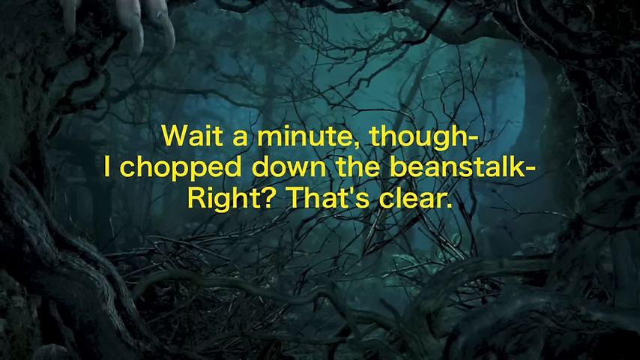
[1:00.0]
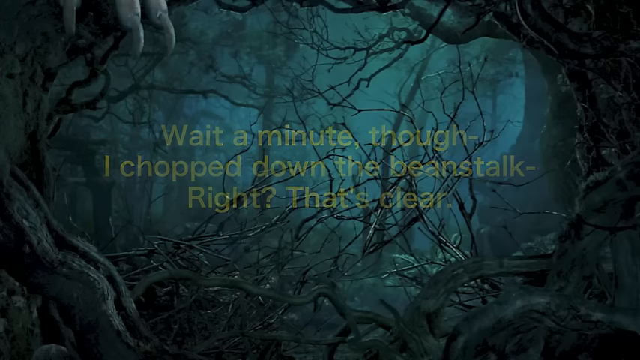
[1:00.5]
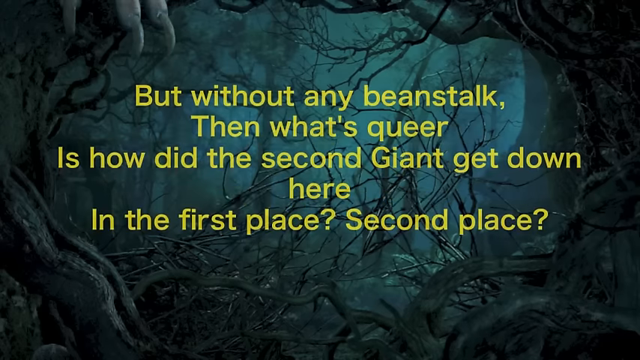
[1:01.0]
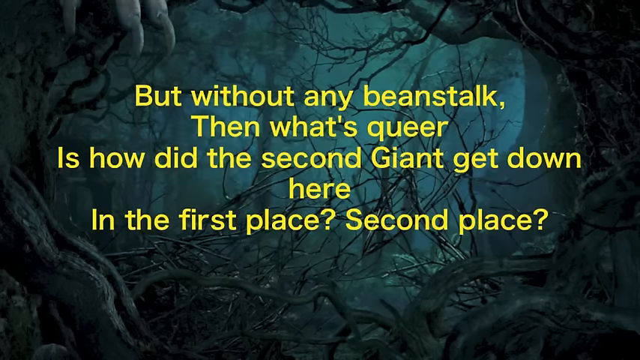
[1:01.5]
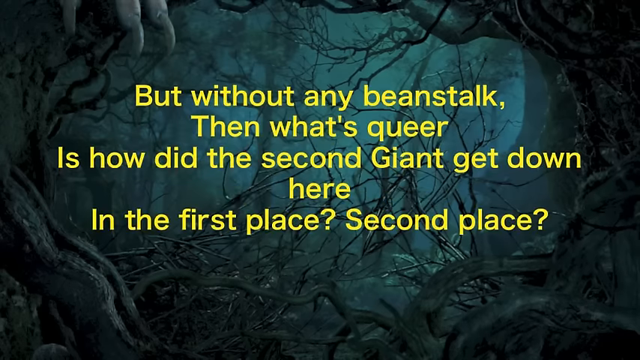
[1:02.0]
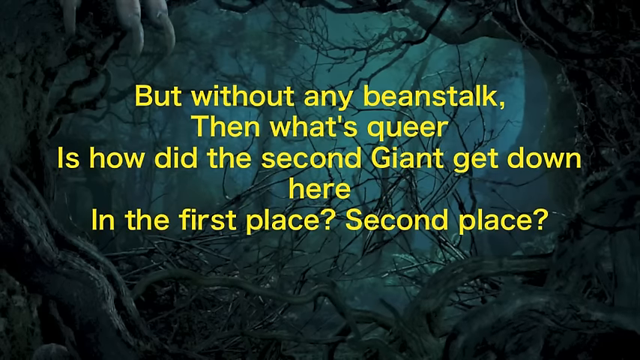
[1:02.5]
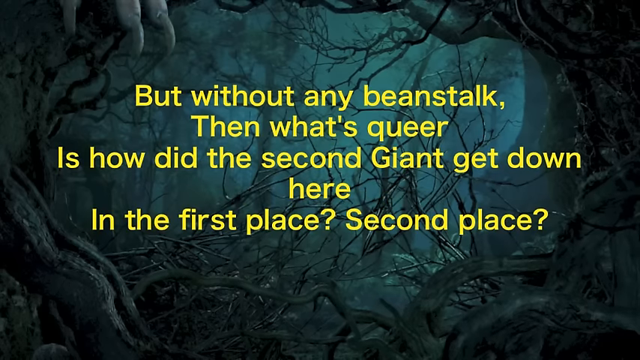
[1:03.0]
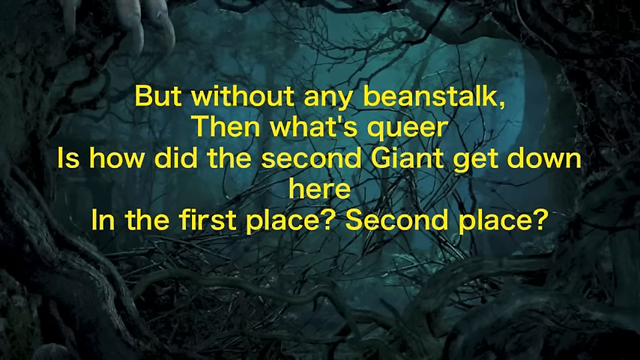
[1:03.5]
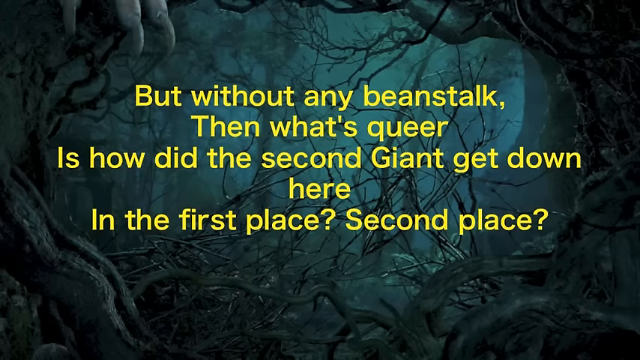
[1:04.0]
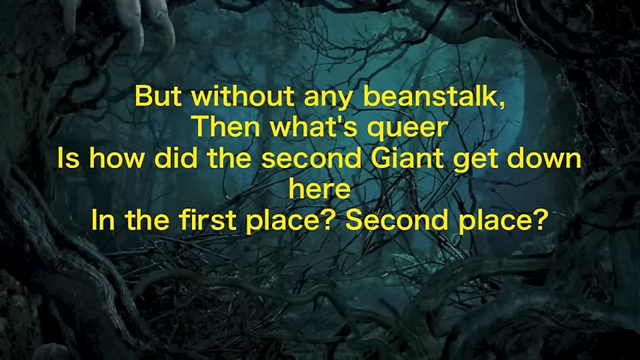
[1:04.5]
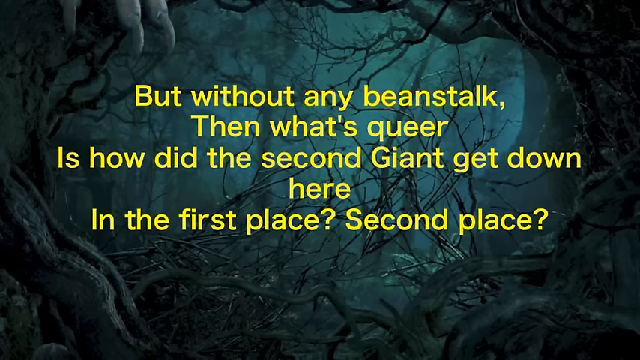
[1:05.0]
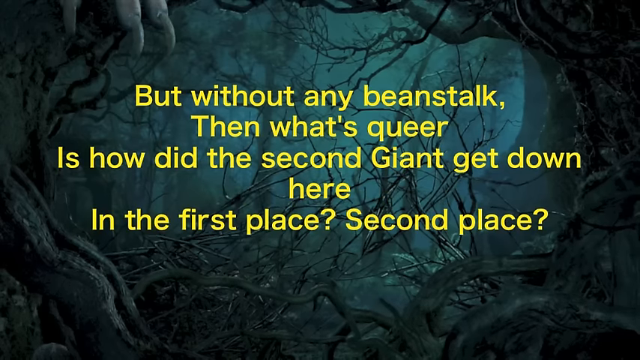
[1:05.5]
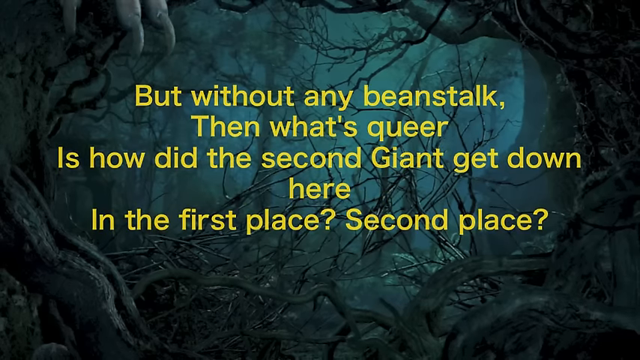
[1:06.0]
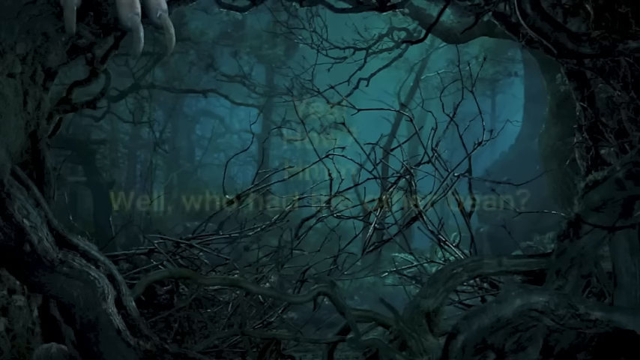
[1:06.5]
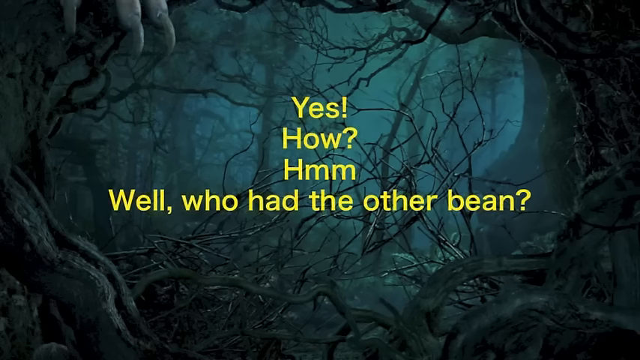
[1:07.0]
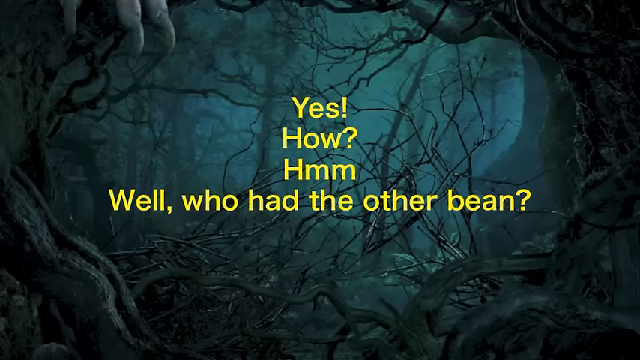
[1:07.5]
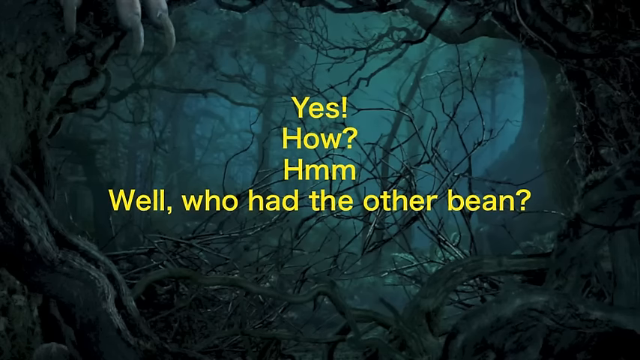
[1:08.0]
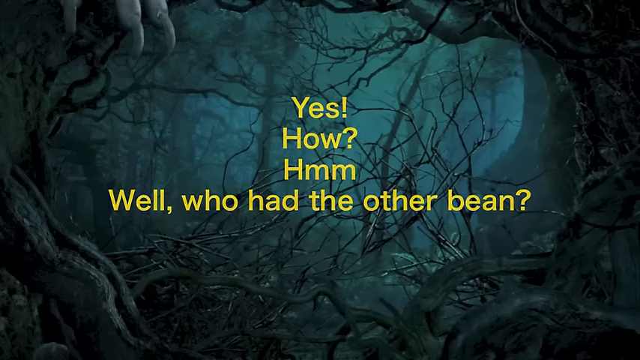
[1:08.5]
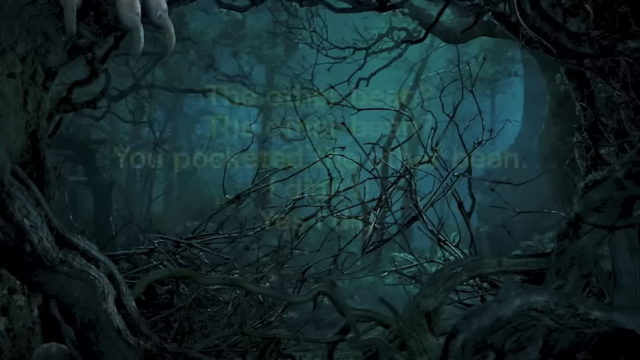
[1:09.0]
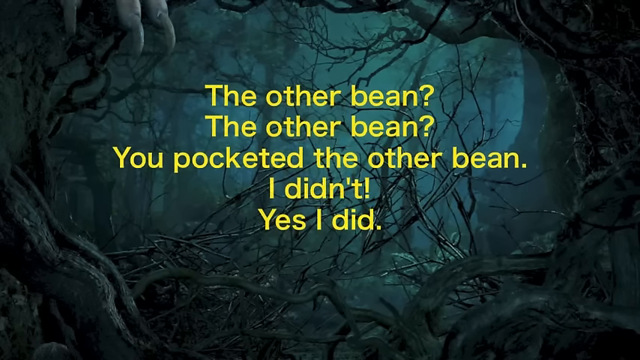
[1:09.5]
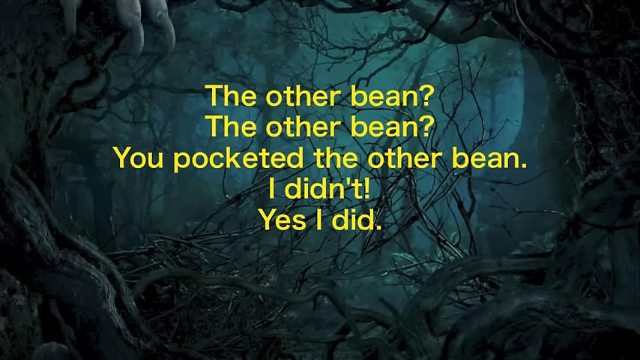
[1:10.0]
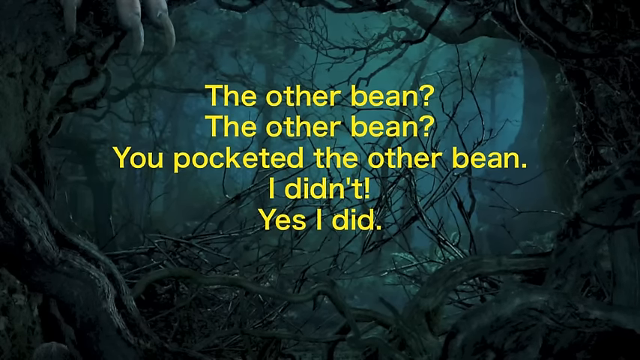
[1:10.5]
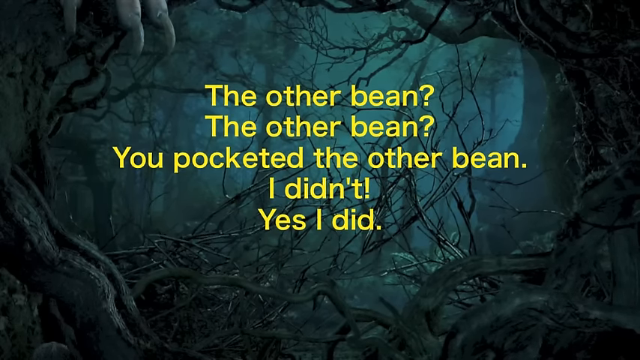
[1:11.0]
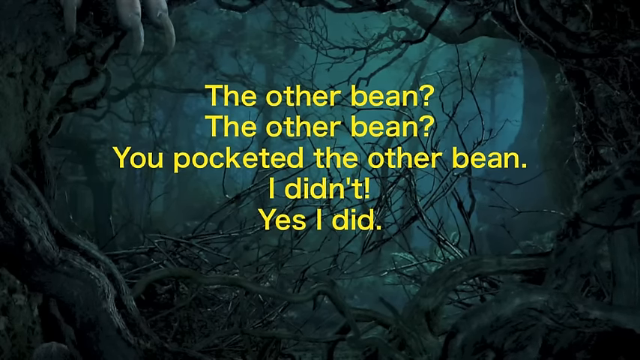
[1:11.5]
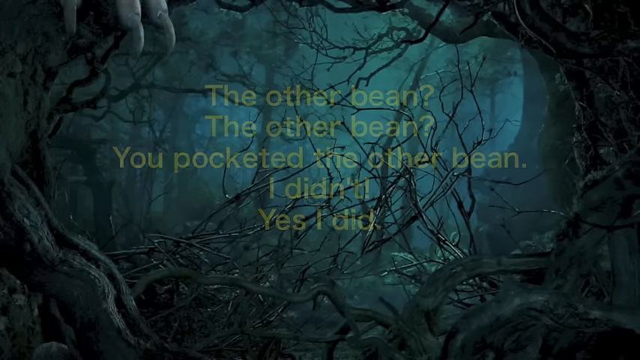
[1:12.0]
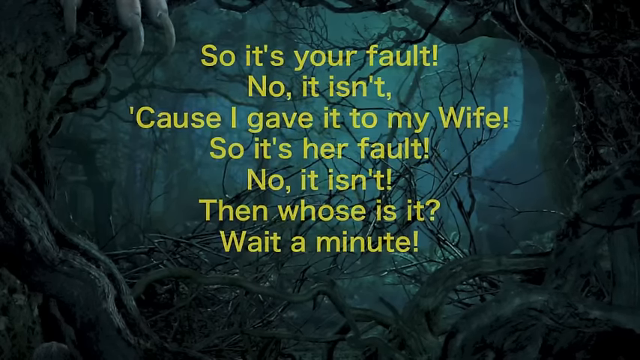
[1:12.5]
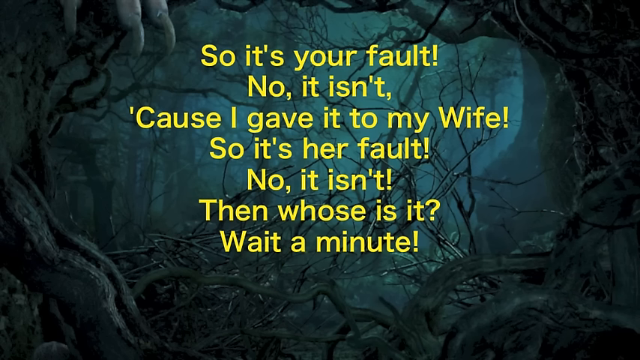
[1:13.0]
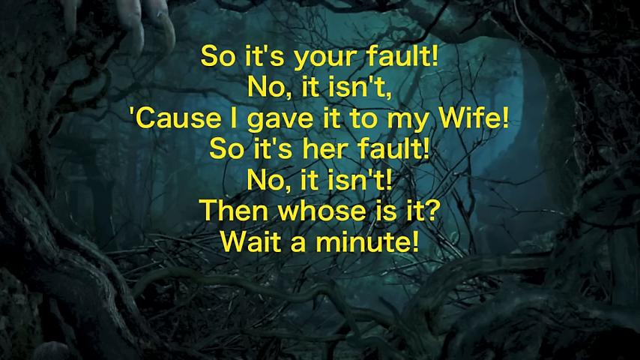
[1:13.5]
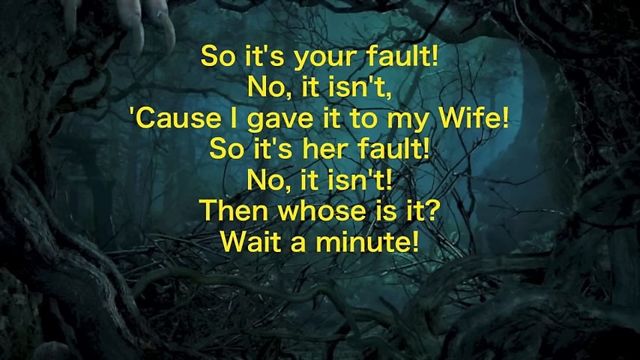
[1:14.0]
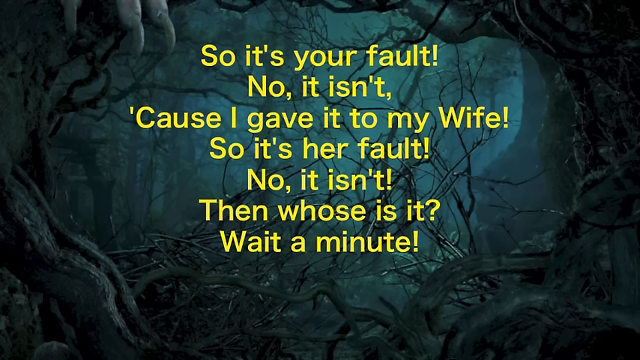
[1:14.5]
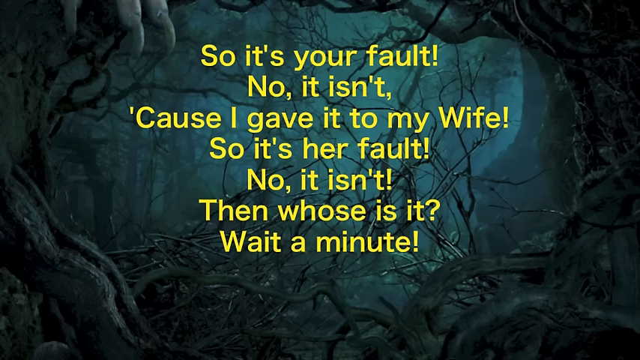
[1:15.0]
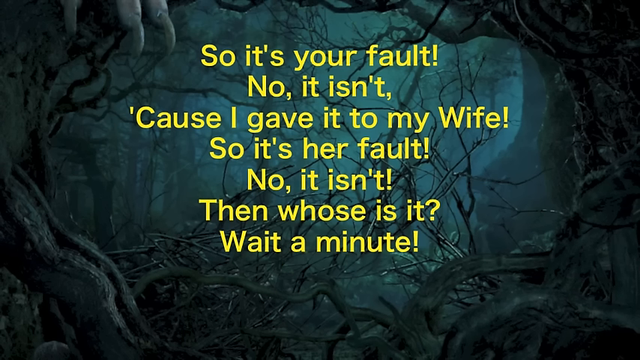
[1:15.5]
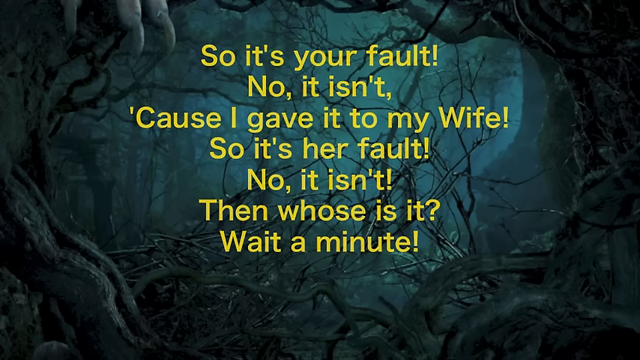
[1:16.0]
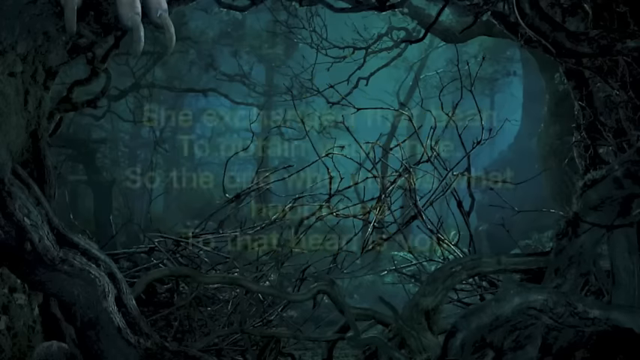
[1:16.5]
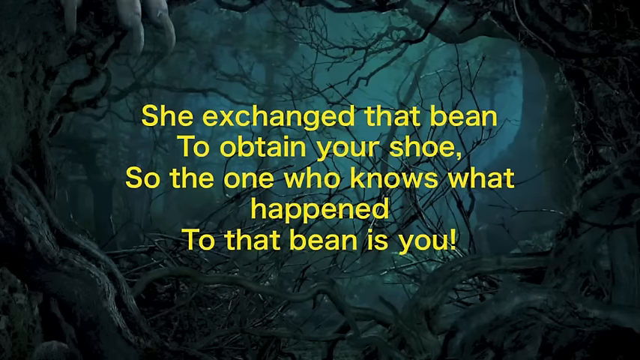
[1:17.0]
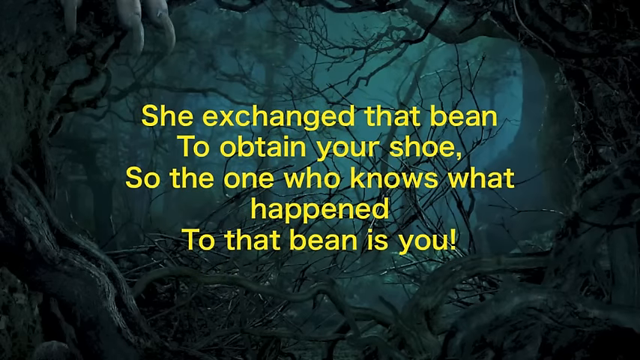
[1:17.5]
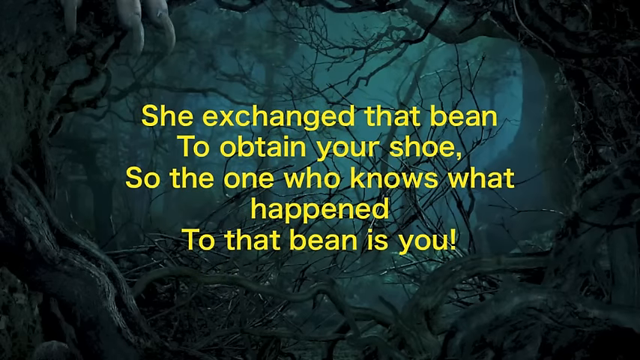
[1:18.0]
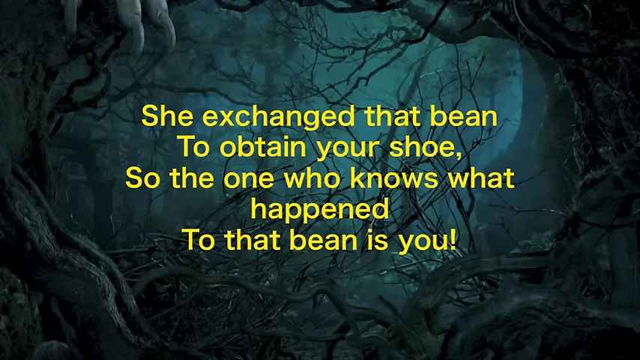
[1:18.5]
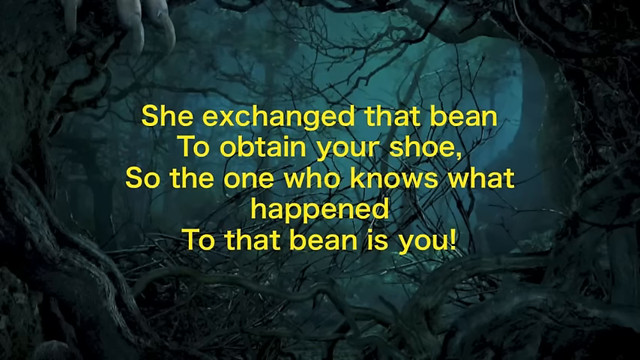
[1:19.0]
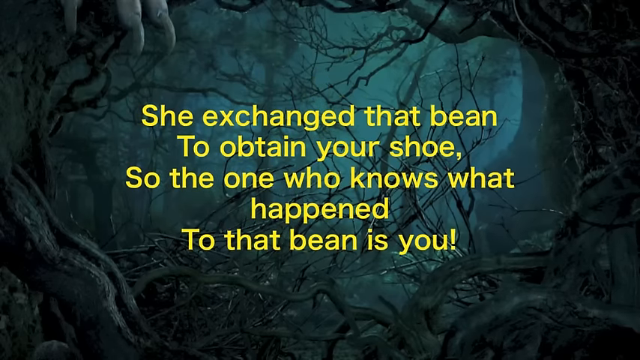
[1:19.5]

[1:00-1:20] The static background remains as the text continues, reading "But without any beanstalk, then that's queer, is how did the second giant get down here? In the first place? Second place?" Next comes "Yes, how hmm well who has the other bean The other bean the other bean you pocketed the other bean I didn't yes I did", then "So it's your fault. No, it isn't. Cause I gave it to my wife. So it's her fault. No, it isn't. Then whose is it? Wait a minute." and "She exchanged that bean to obtain your shoe, so the one who knows what happened to that bean is you."